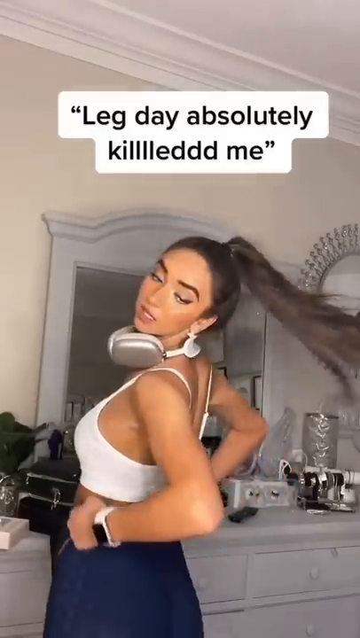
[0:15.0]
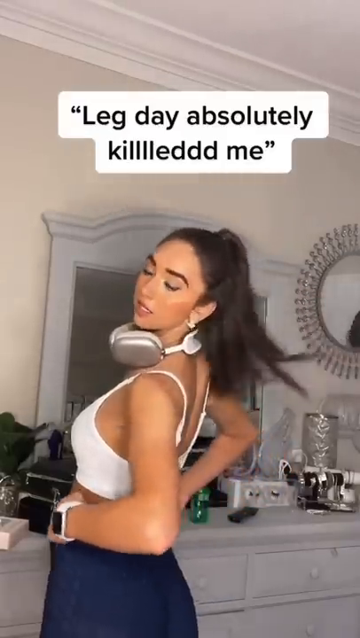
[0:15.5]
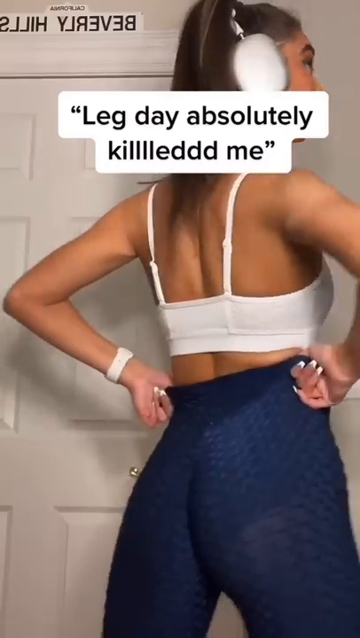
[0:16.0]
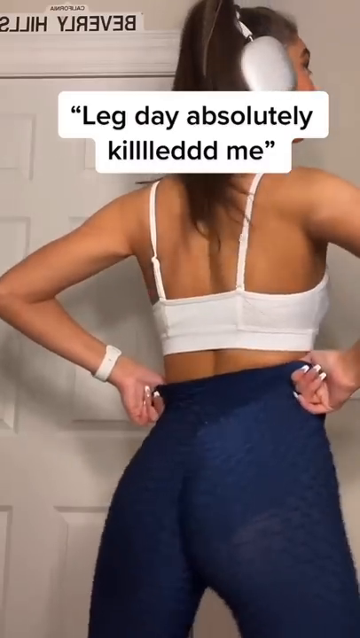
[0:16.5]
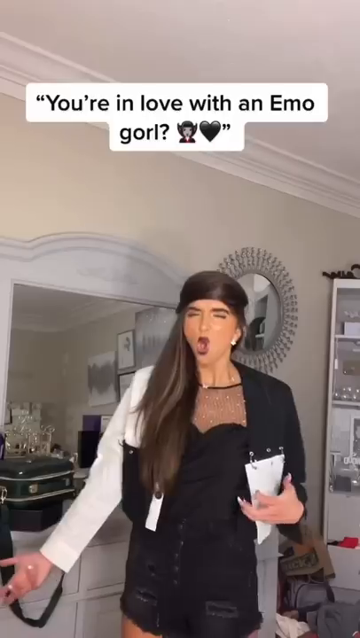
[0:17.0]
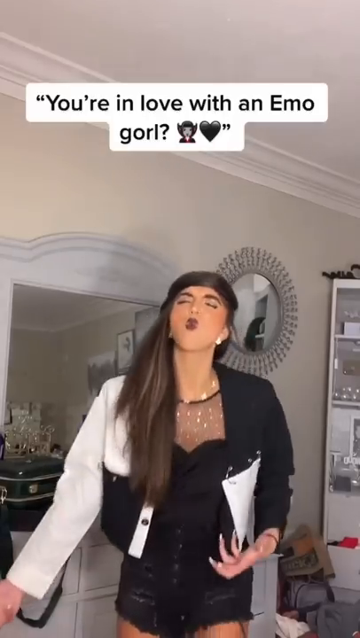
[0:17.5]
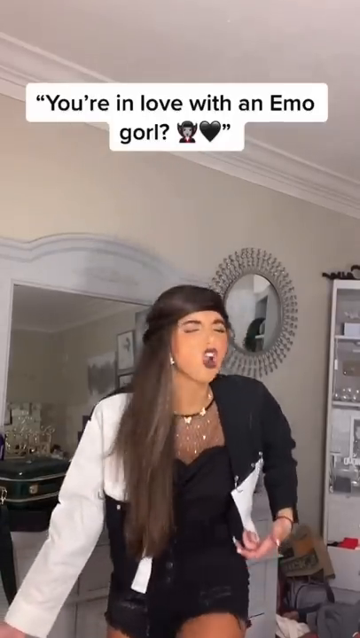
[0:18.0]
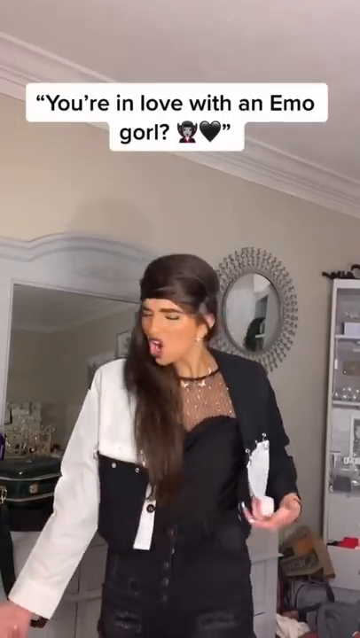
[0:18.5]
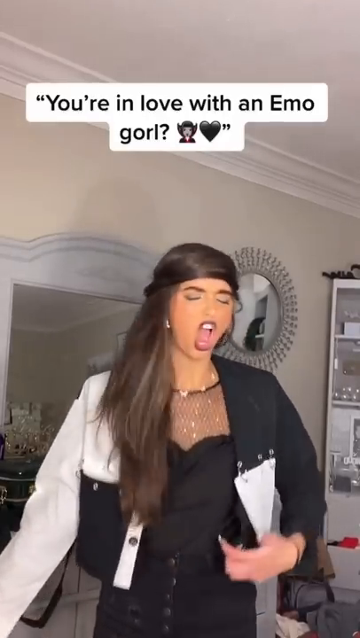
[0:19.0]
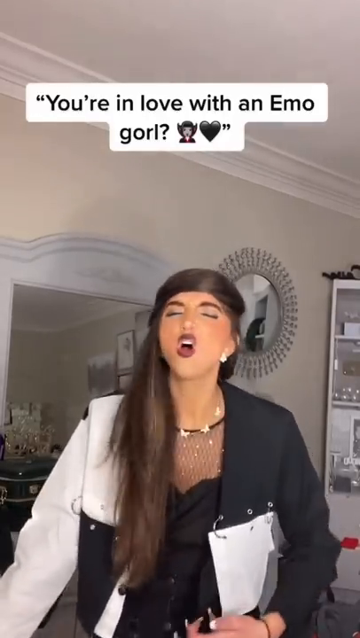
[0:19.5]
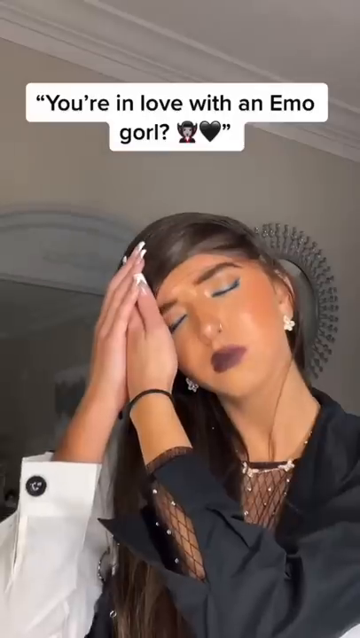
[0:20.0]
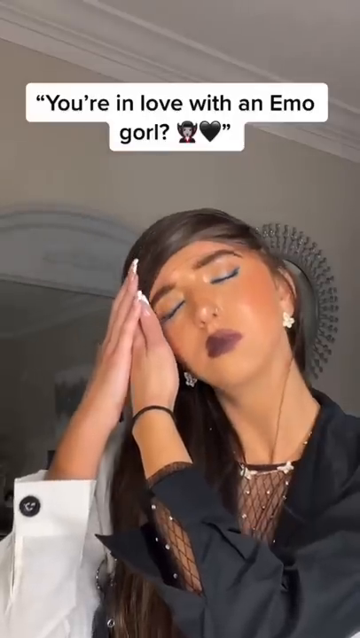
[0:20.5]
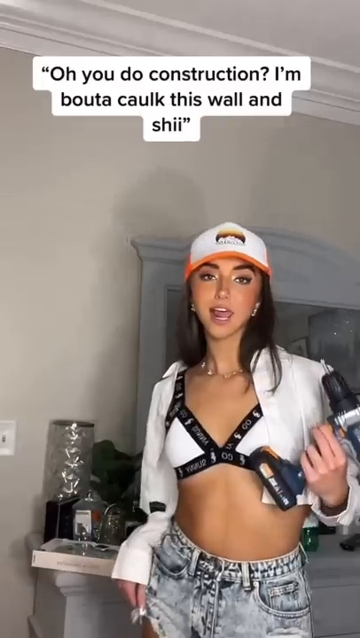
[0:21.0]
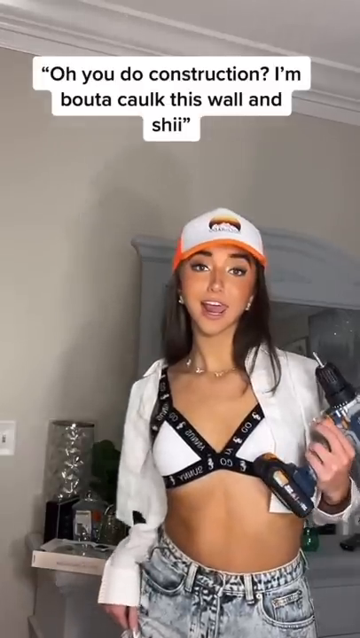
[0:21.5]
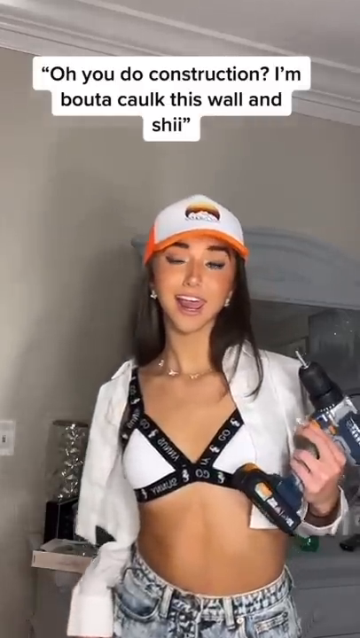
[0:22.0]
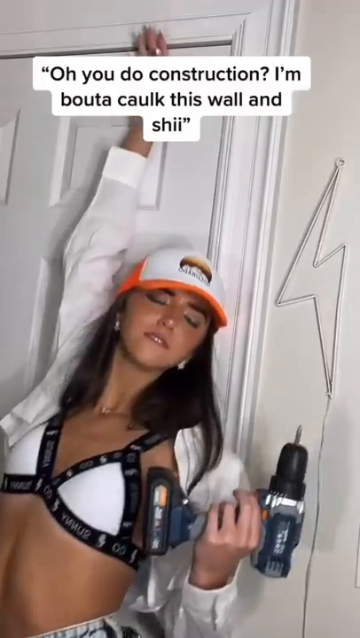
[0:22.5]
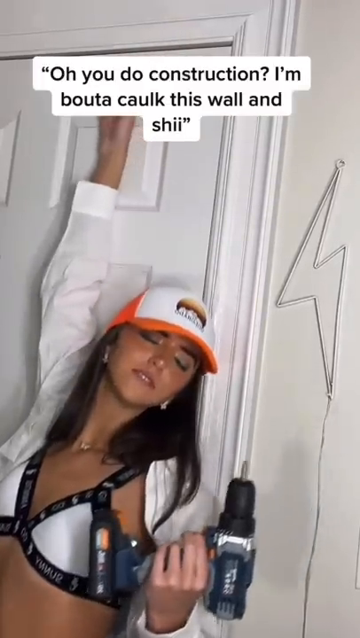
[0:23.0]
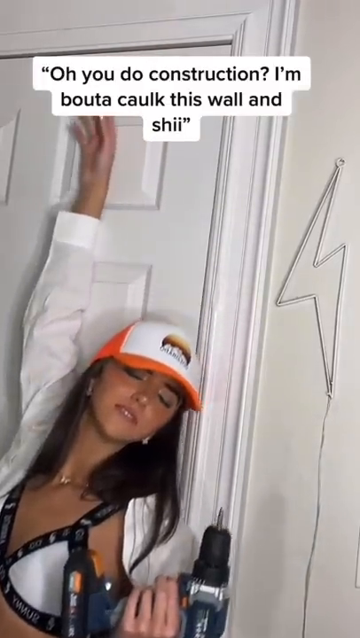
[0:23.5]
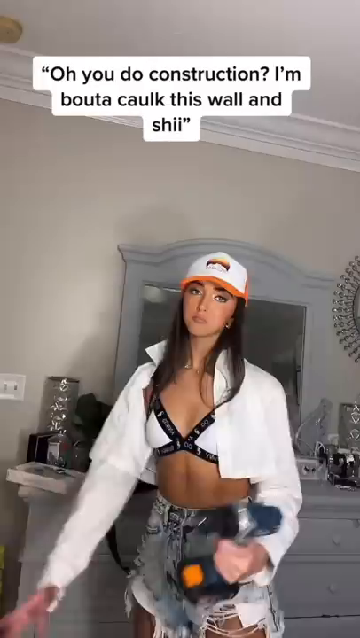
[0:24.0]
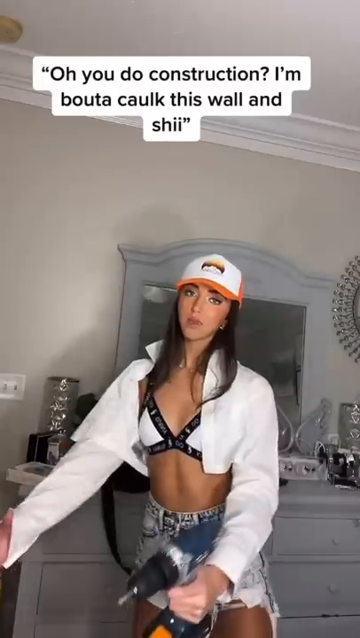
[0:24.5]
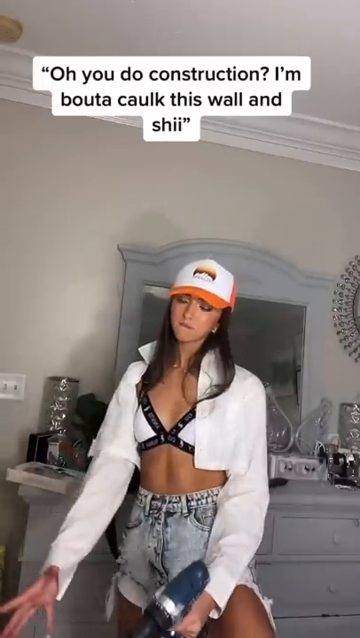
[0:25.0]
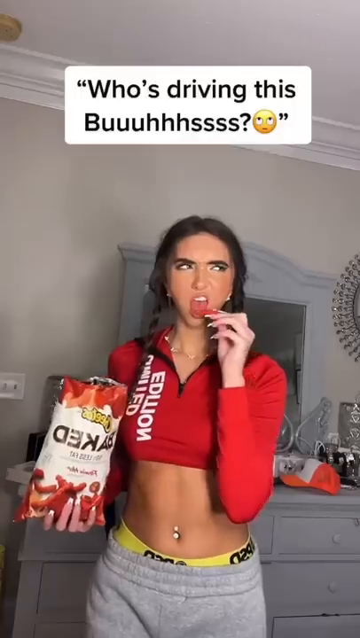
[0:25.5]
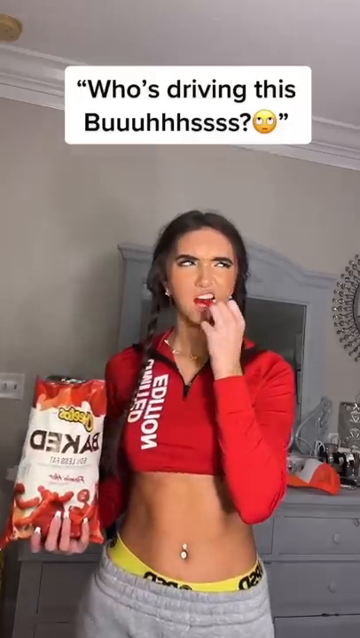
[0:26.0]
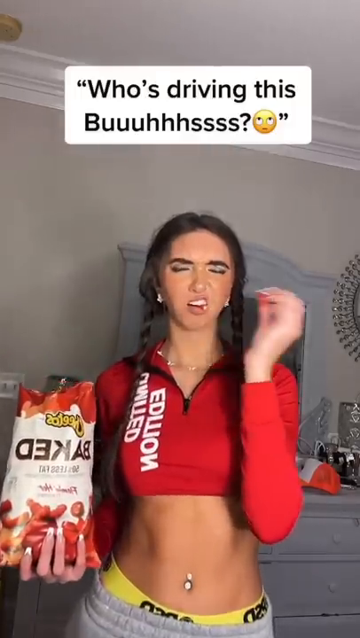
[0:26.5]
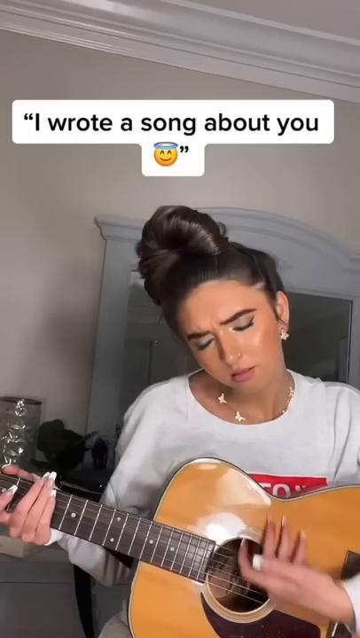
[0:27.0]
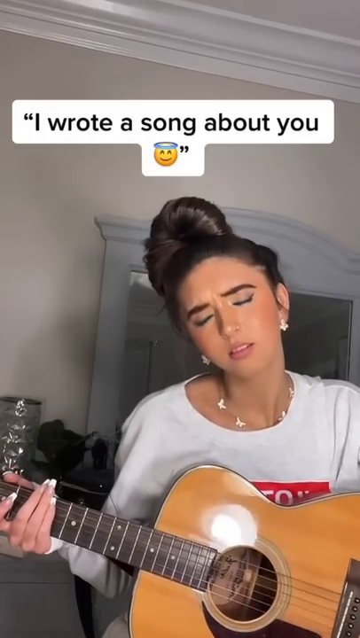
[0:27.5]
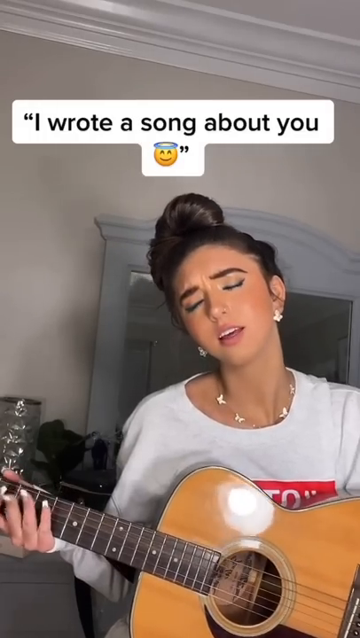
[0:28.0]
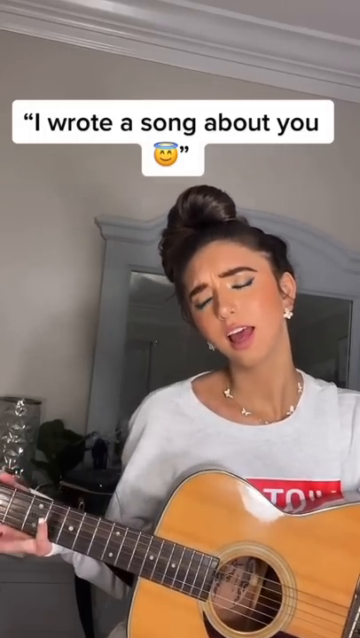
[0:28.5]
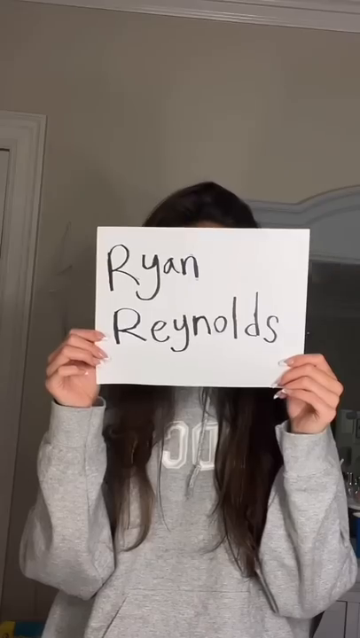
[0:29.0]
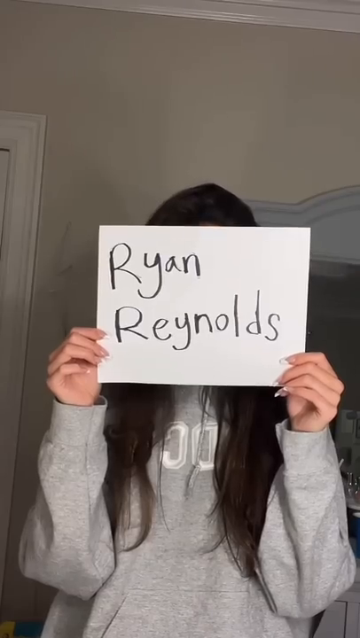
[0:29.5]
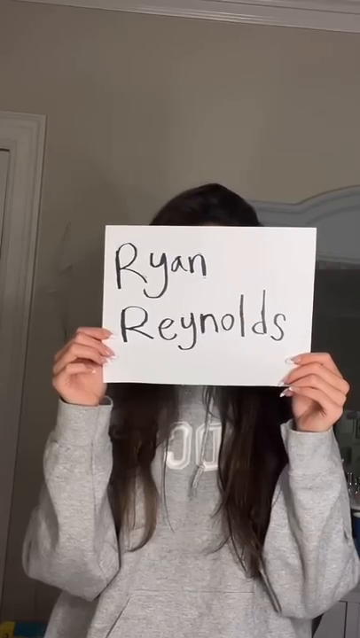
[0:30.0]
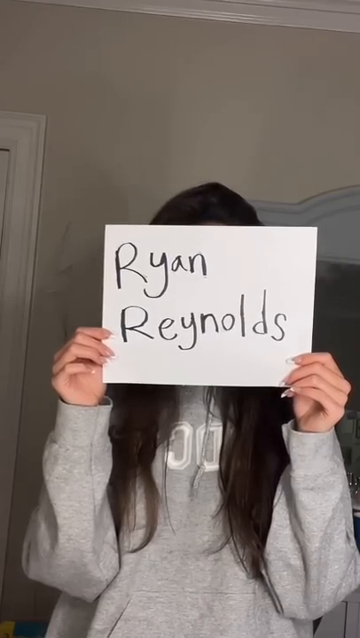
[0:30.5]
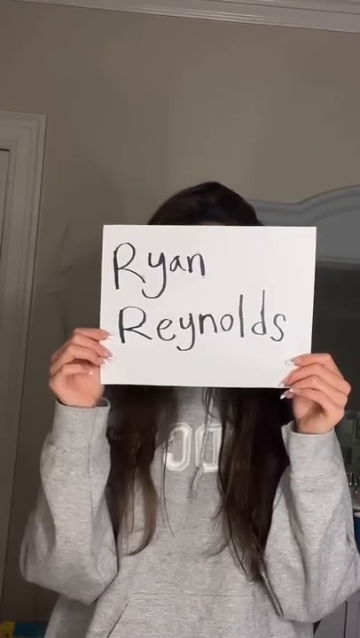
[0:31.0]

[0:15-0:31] The text says "you're in love with an emo gorl?" and the girl, dressed in an emo outfit, sings. Then the text says "oh you do construction. I'm about a caulk this wall and shii" and she is dressed up with a hat on and an electric screwdriver in her hand. Next the text says "who's driving this buuuuhhhsss" and she eats Cheetos. Then the text says "I wrote a song about you" and she strums a guitar and sings. Finally she holds up a piece of paper in front of her head while wearing a gray sweatshirt, and "Ryan Reynolds" is written on it. The video ends with the girl having dressed up in all these different ways to adapt to the boys she talks to.